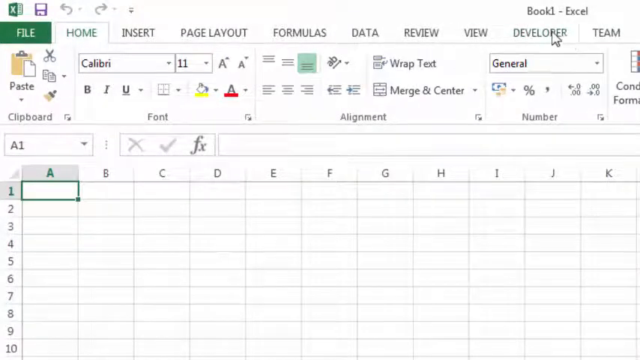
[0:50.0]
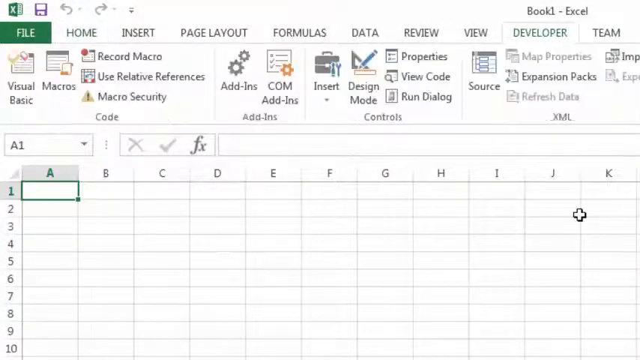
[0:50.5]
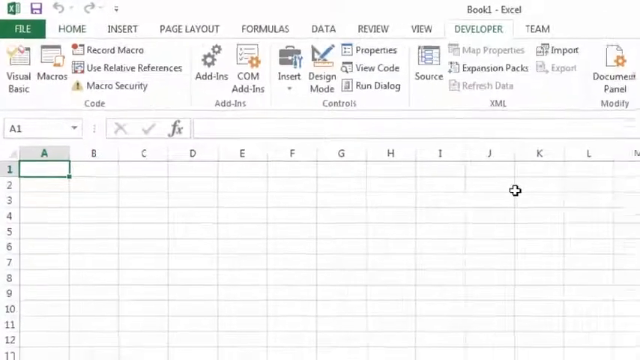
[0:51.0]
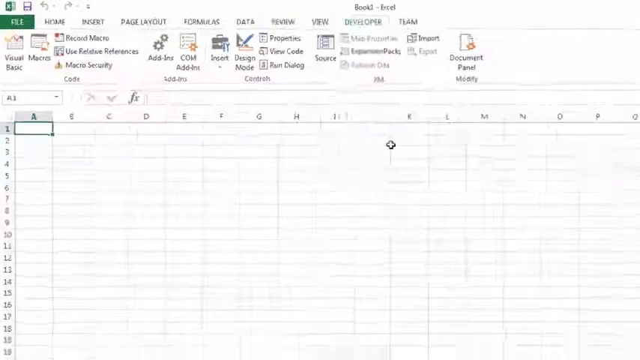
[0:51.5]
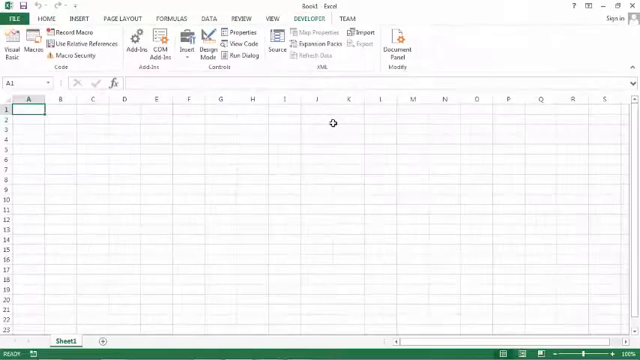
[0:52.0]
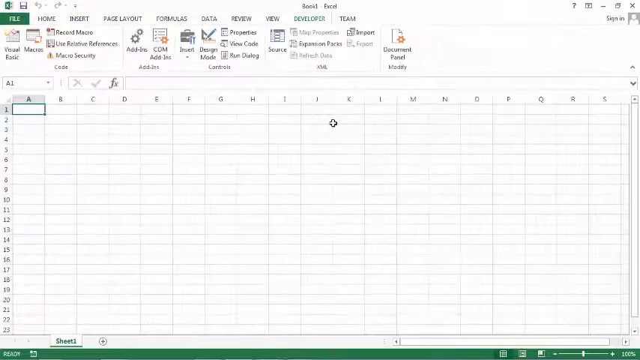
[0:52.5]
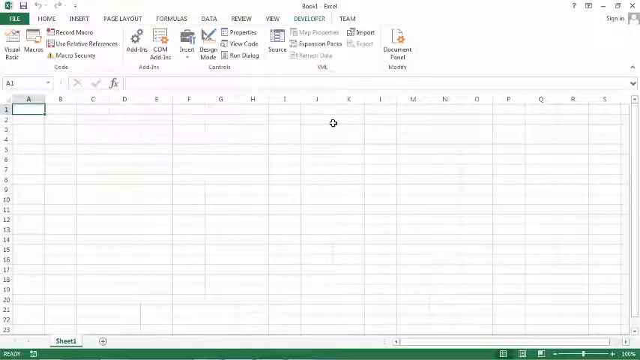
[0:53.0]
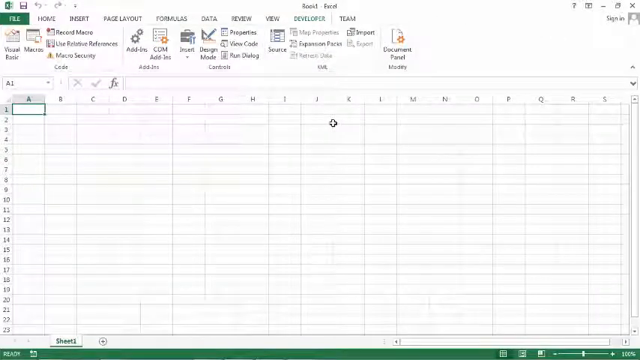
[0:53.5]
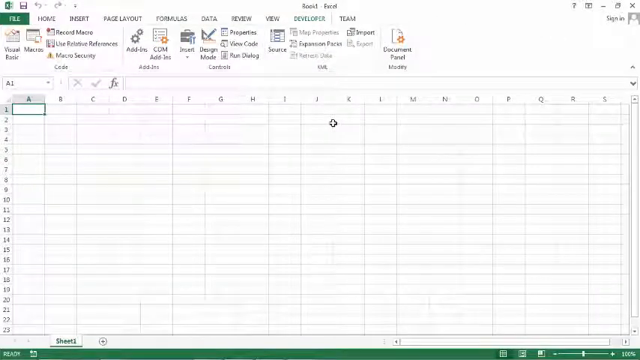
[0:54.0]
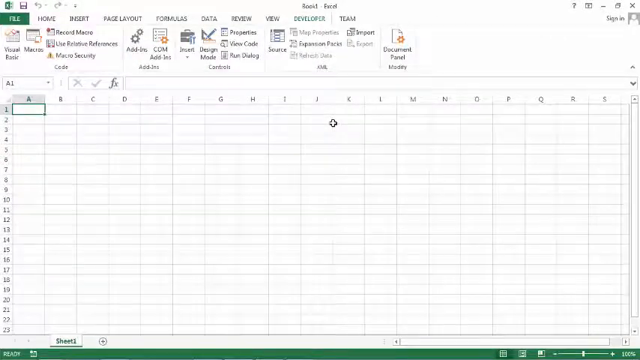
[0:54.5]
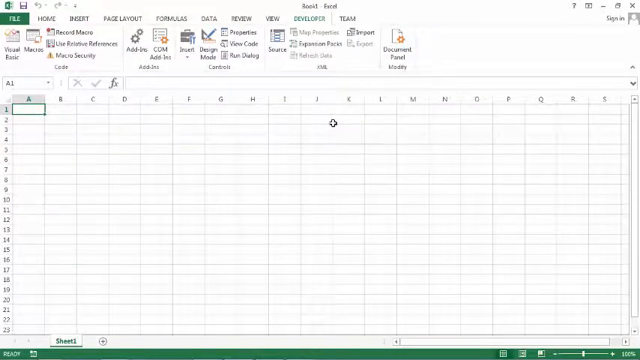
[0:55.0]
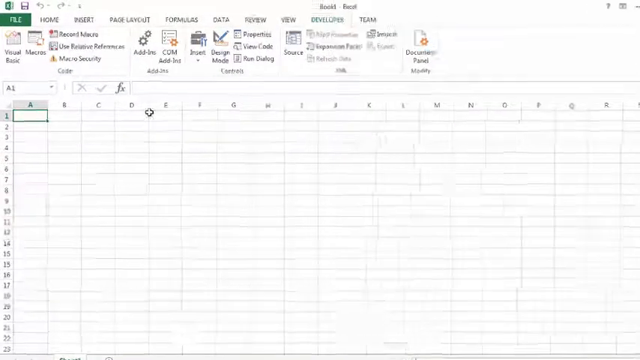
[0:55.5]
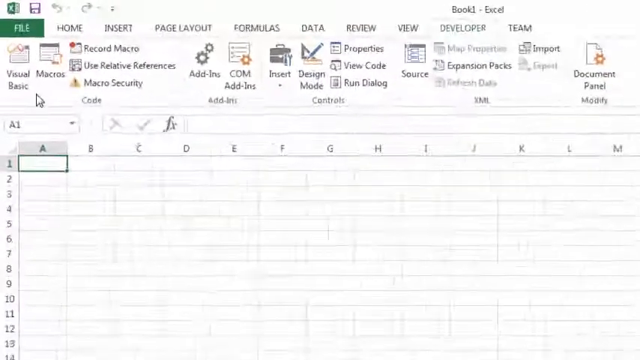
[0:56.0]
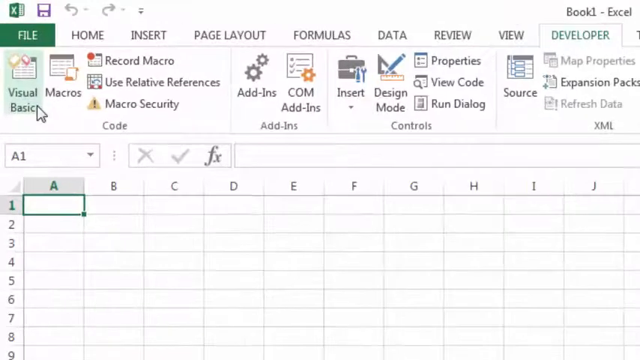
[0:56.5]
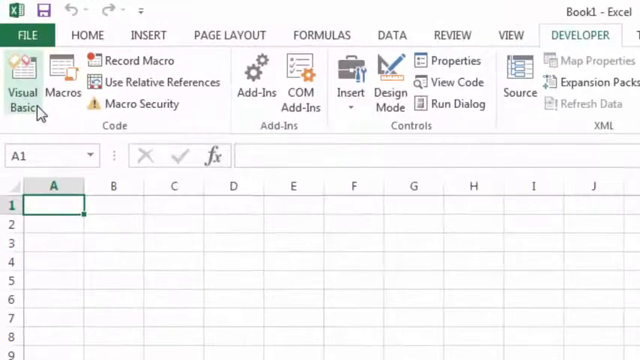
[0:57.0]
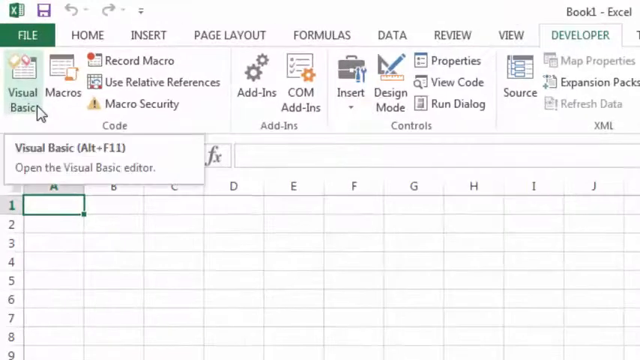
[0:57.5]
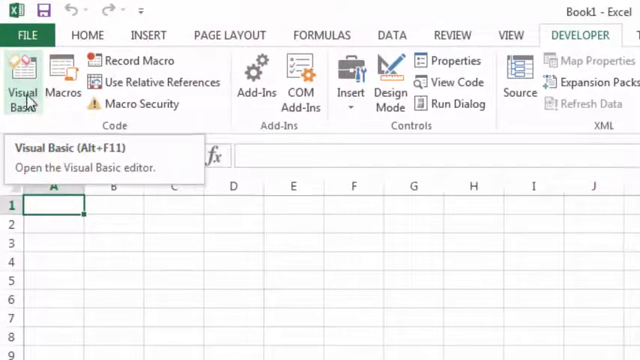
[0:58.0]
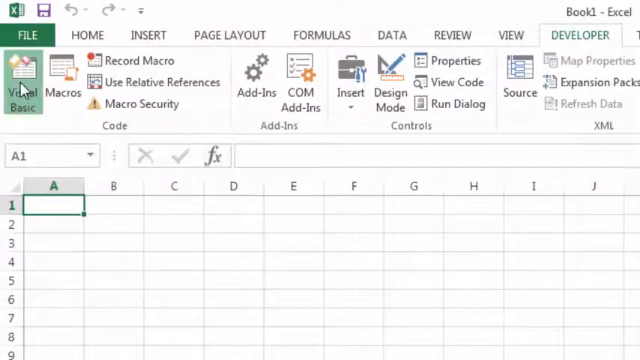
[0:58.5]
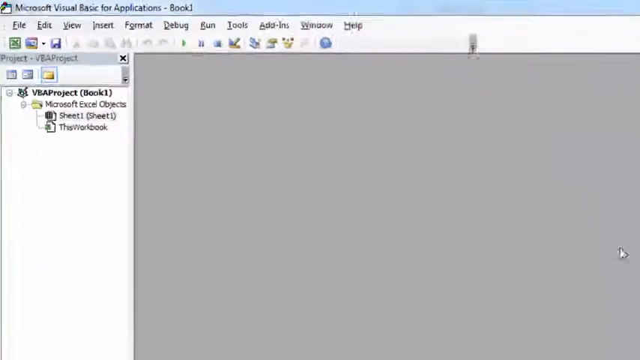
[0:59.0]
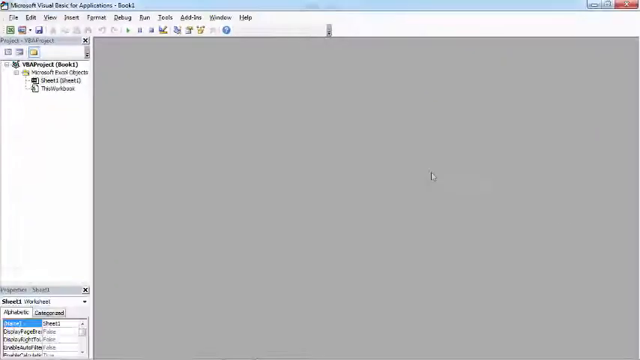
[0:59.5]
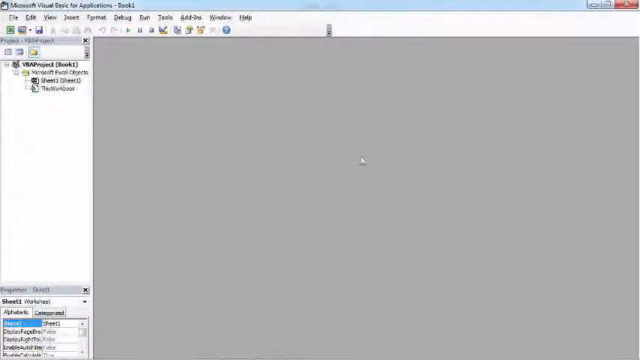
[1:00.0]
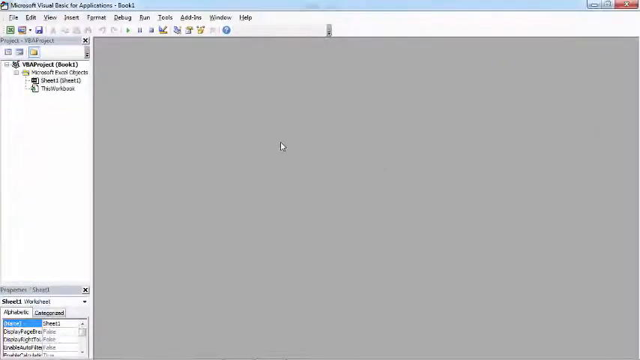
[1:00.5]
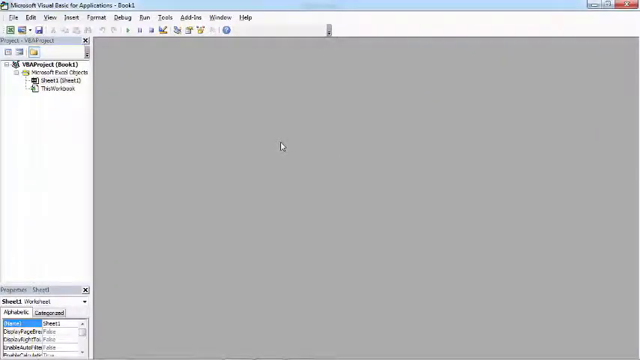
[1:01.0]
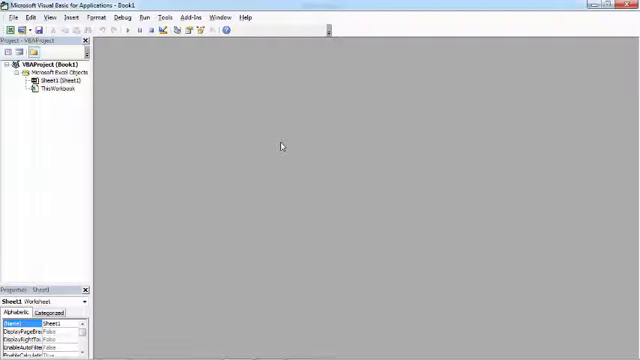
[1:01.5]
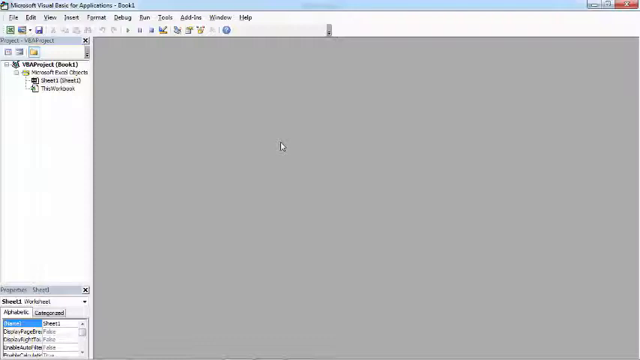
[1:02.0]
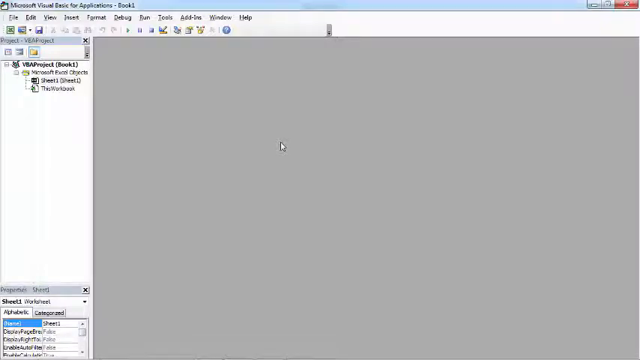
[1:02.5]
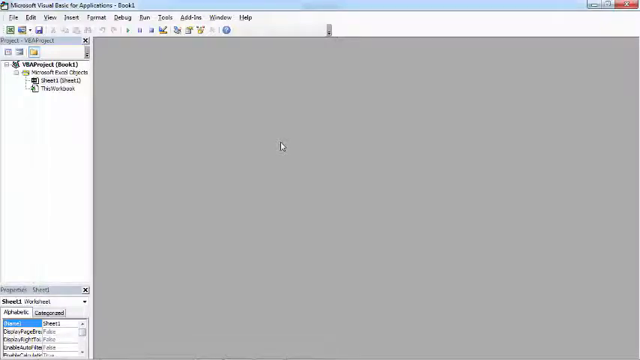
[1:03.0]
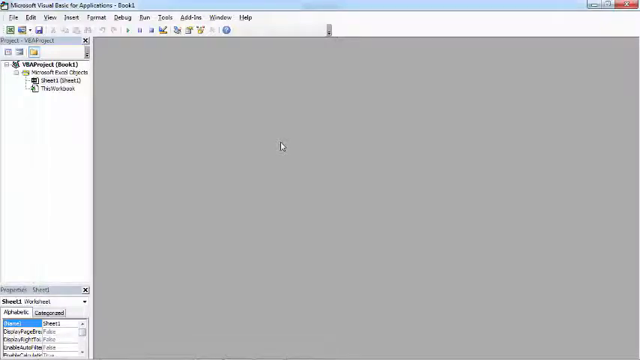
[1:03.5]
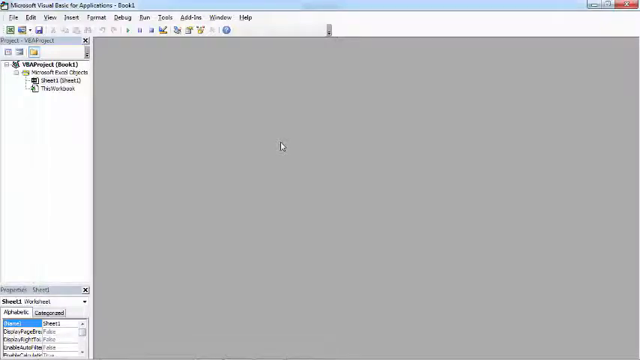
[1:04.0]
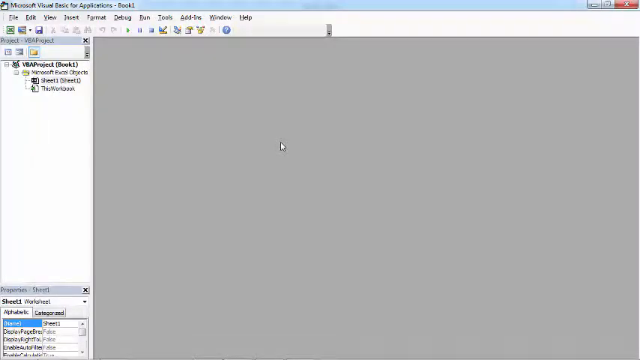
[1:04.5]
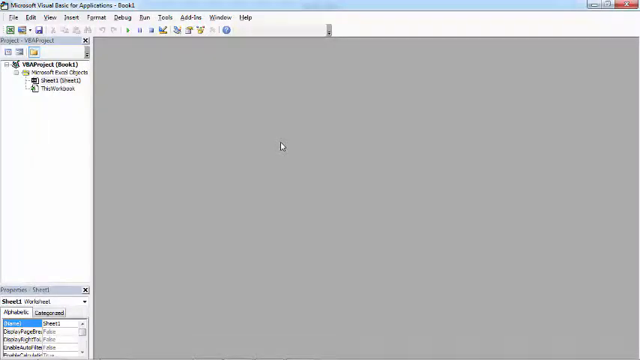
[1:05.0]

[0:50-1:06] The Developer tab is now shown, and column A is zoomed in and out. Visual Basic is selected and opened, showing the project.